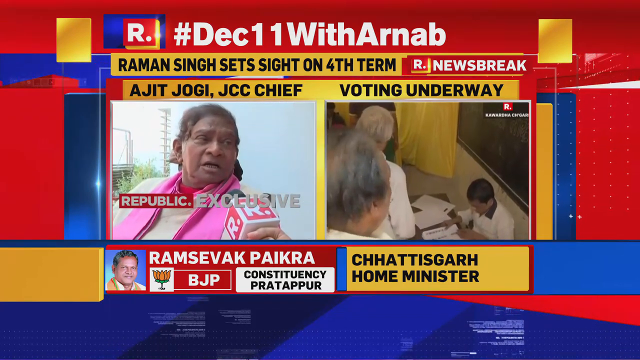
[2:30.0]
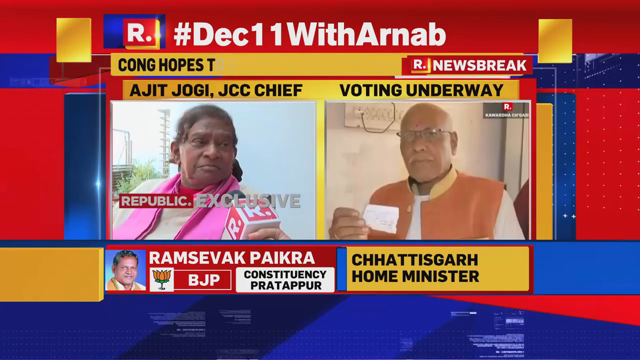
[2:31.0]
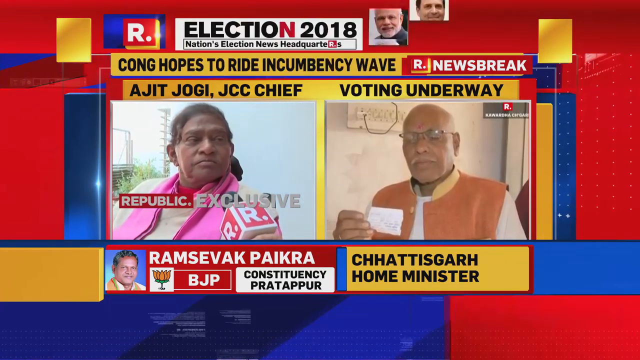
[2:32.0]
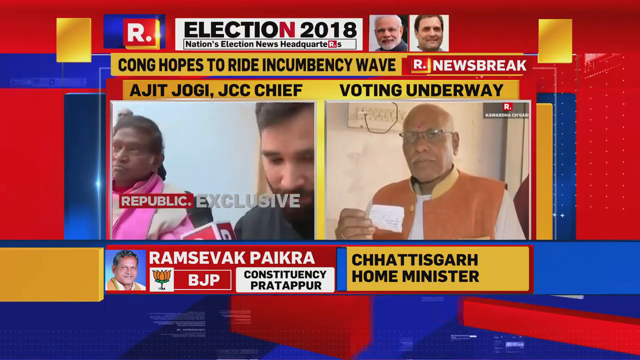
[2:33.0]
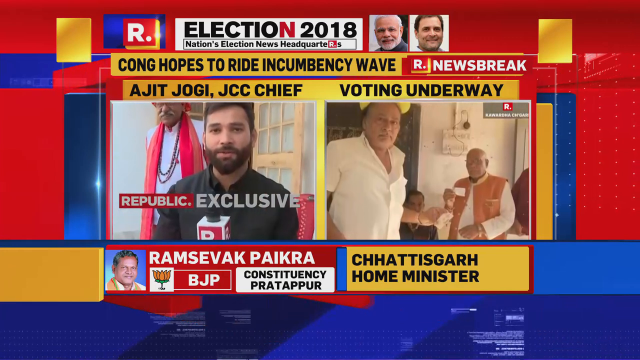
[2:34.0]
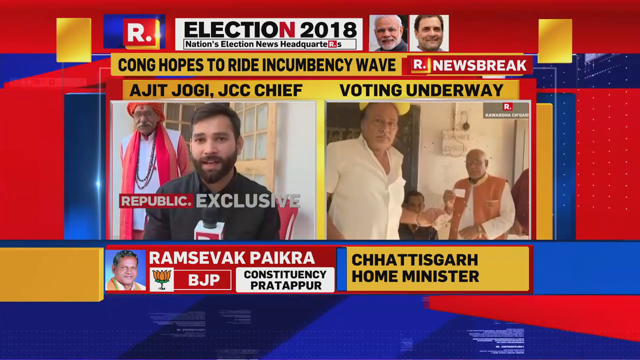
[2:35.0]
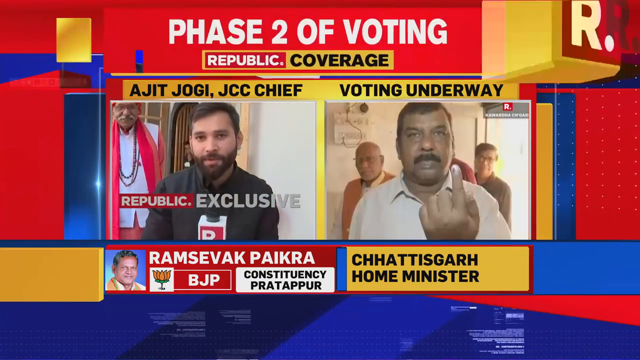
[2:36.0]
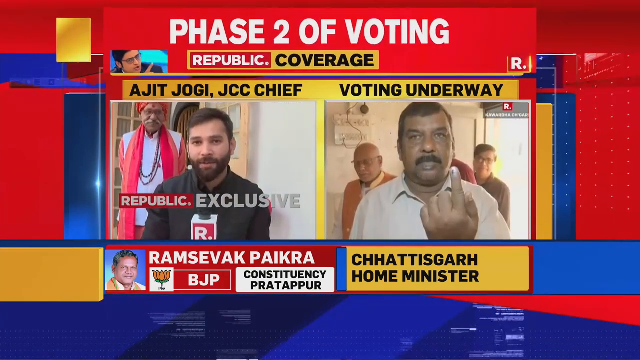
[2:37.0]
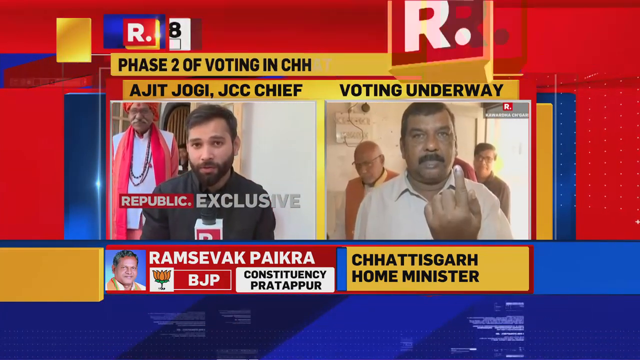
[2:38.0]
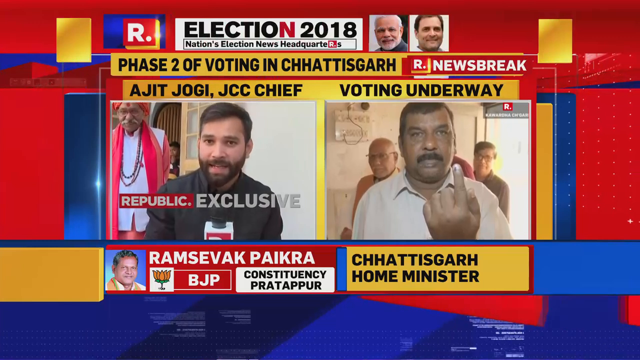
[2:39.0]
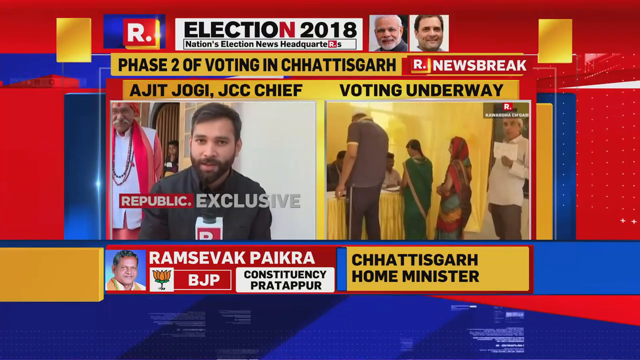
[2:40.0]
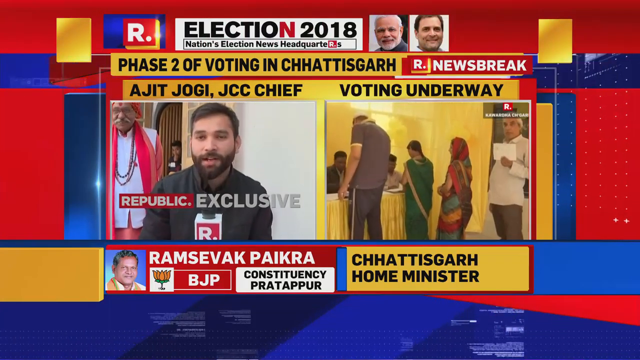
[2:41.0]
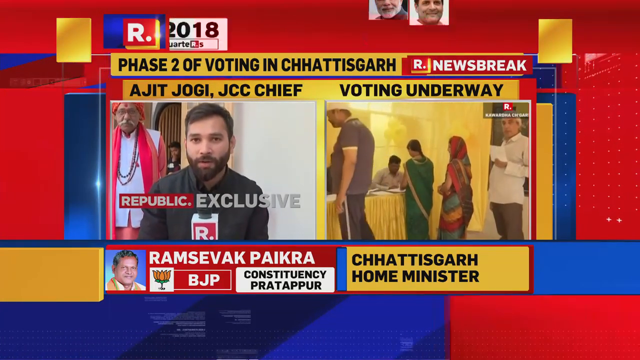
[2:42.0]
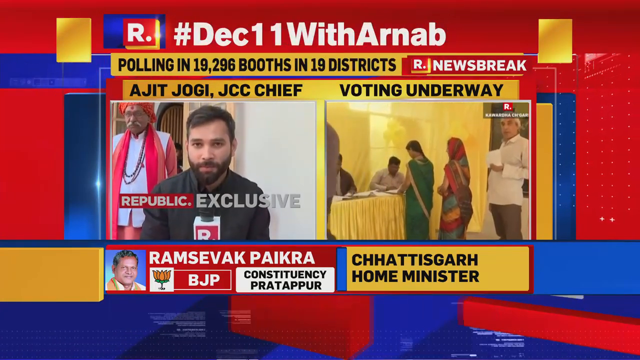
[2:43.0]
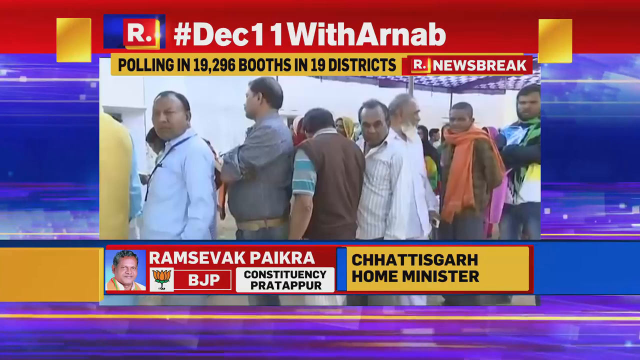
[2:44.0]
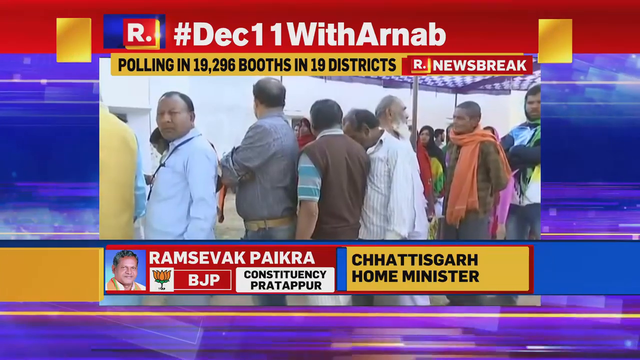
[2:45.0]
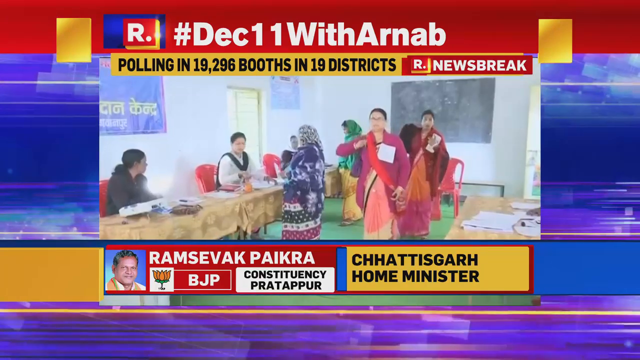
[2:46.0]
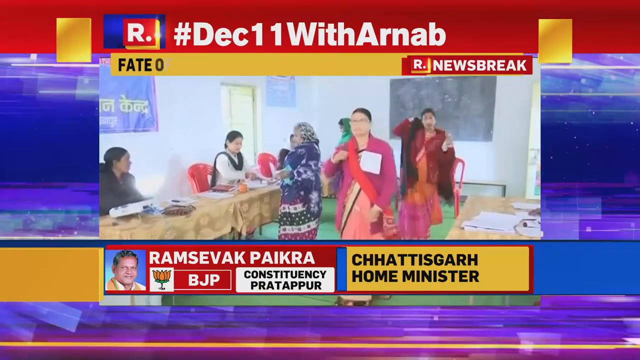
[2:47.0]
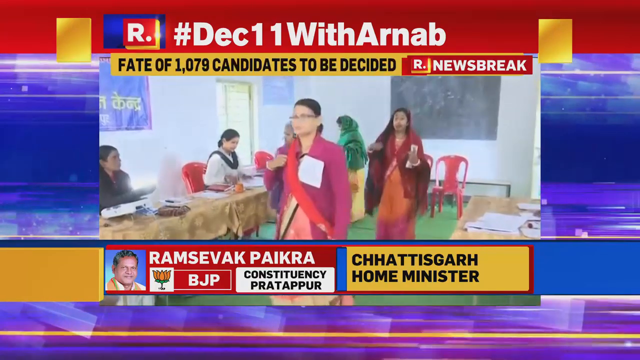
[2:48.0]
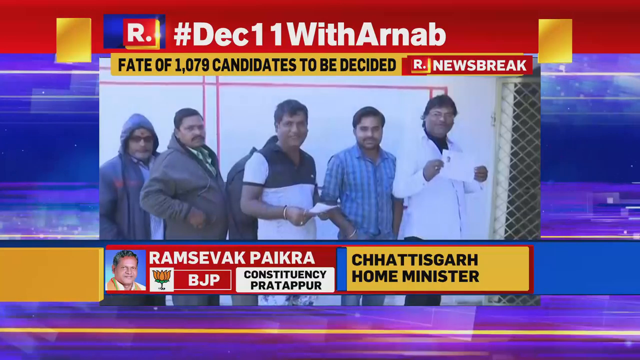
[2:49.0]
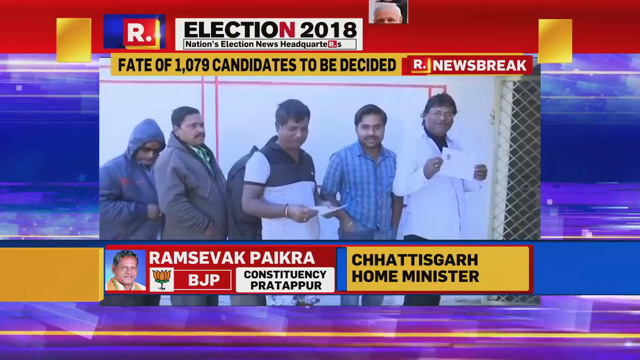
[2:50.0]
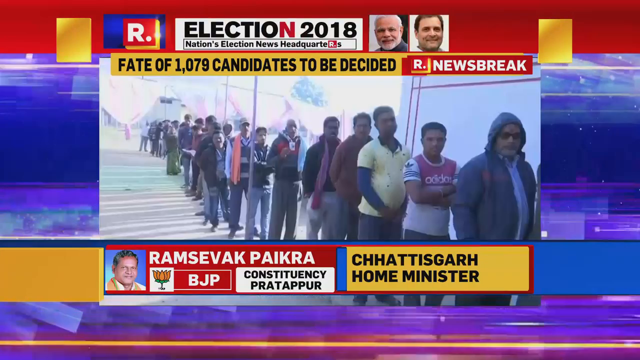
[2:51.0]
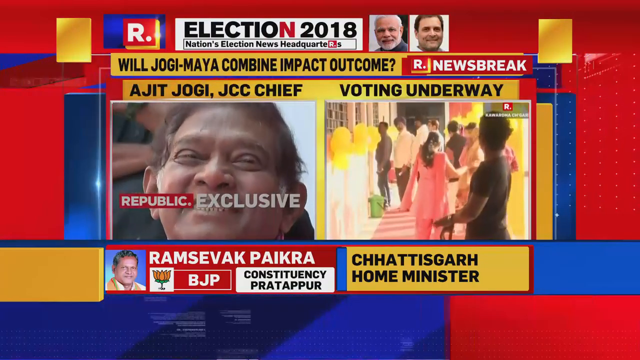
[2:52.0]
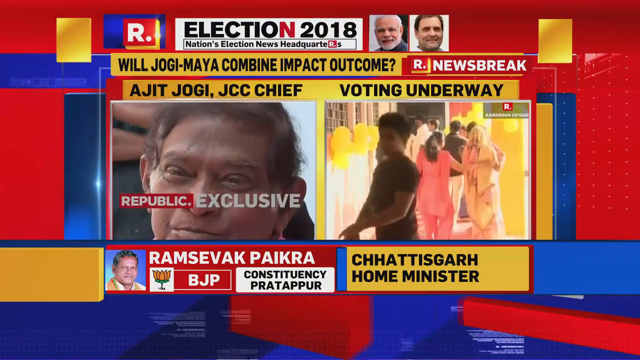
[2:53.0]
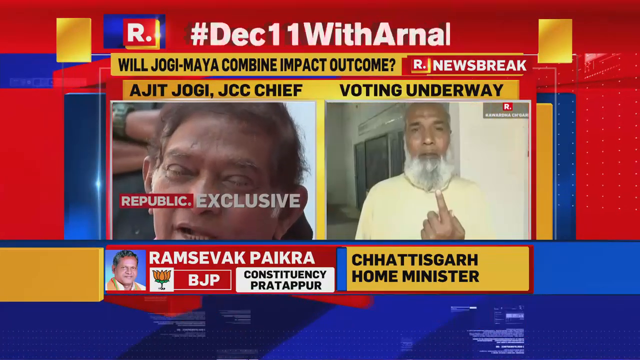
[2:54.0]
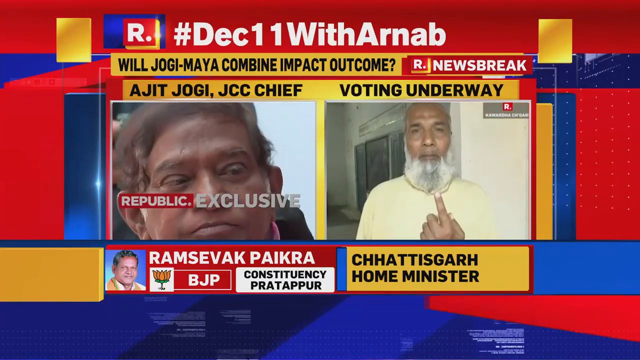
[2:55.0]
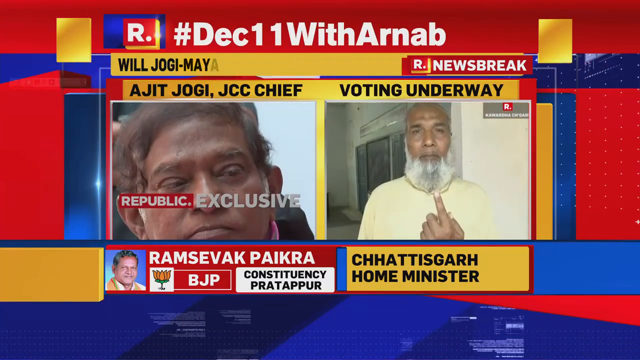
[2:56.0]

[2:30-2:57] The headline at the top usually alternates between two graphics, but something large and red comes in, with white all-caps text saying "PHASE TWO OF VOTING" and "republic coverage" underneath; it then goes away and the alternating headlines return. On the right, after people checking in with the man at the desk, a man in a soft orange vest with glasses holds up a piece of paper in his right hand, maybe showing that he voted. The view kind of pans out to show a man in a white shirt in the foreground. People, apparently, all make the same gesture, holding up their index finger like a number one sign but with the back of their hand toward the camera; a man with a black mustache holds that up. Then people in line appear, and the view kind of pans out to show them outside in line. On the left side, the woman in pink kind of comes to the end of her interview, and the view switches to the man who was interviewing her, in the black shirt, talking to the camera. Then both sides become one video showing two different views of people in line: lots of people in line, then women in line and men in line, who look kind of separated a little, then lots of people in line from a few different views. Then a side-by-side returns with a close-up of the woman who was interviewed, smiling and looking at the camera, with "Republic exclusive" on top. On the right are lots of people in line and voting, and people making the number one sign with their palm facing toward them.